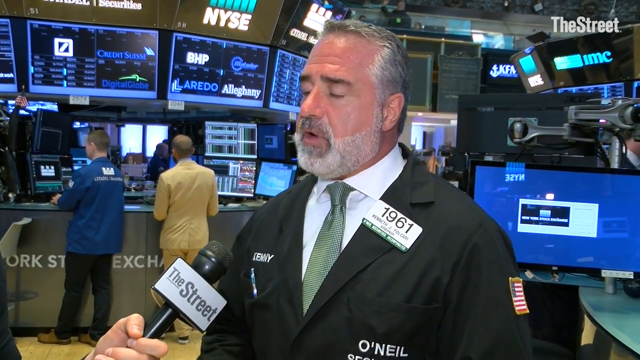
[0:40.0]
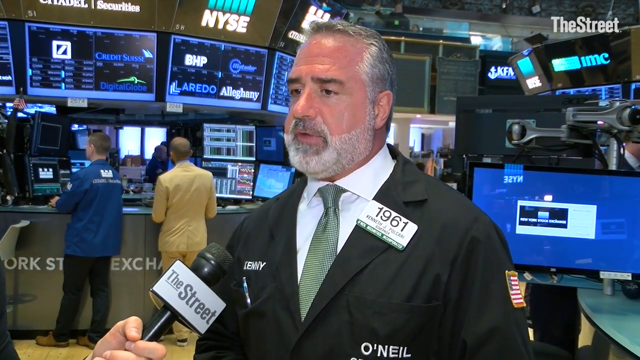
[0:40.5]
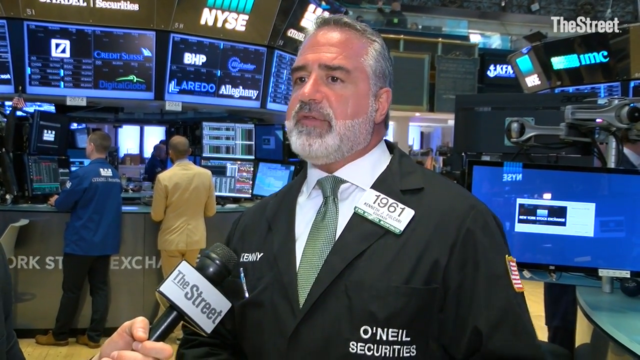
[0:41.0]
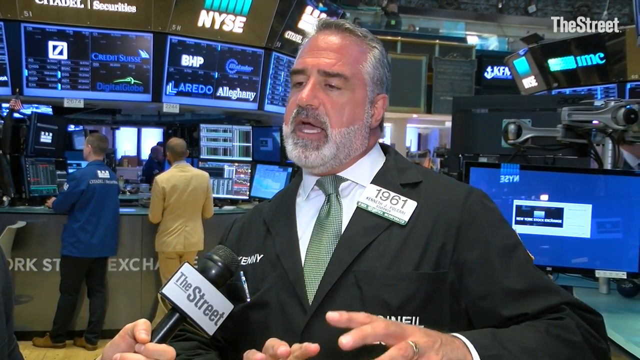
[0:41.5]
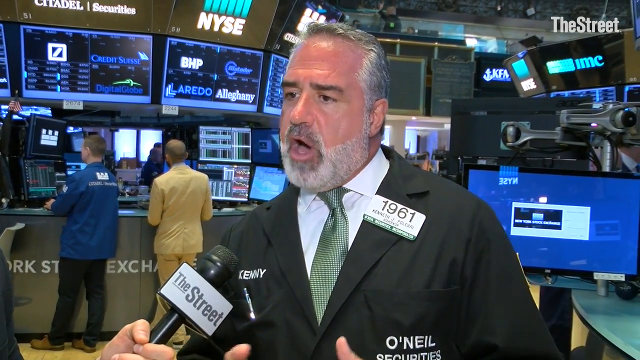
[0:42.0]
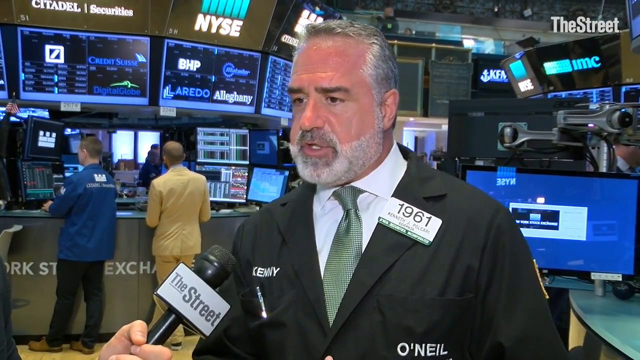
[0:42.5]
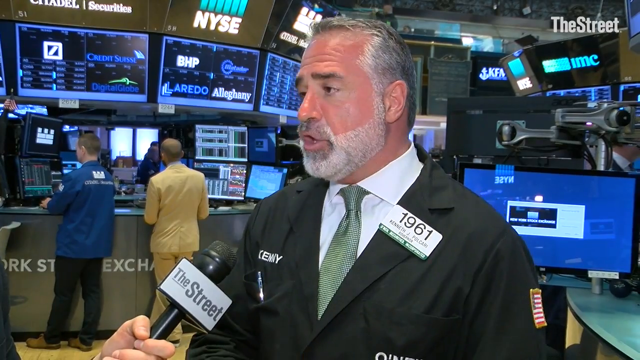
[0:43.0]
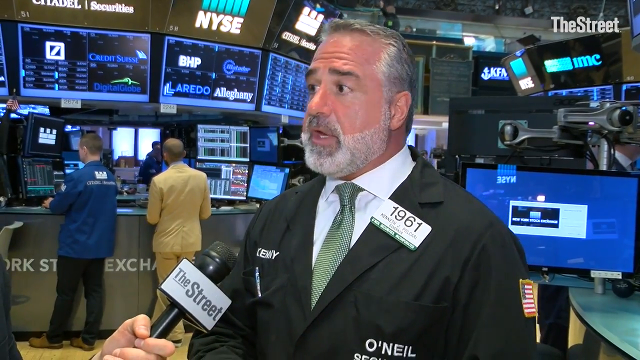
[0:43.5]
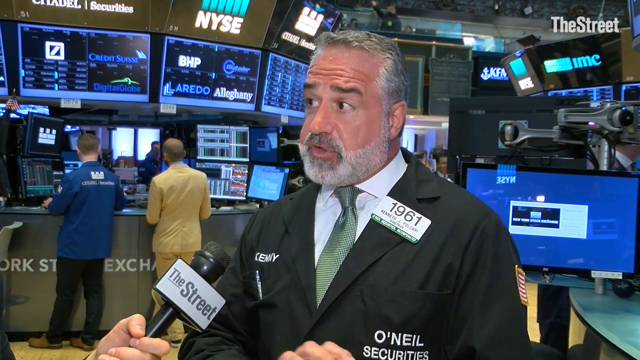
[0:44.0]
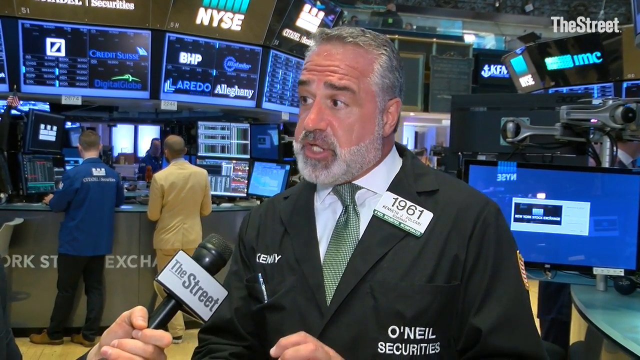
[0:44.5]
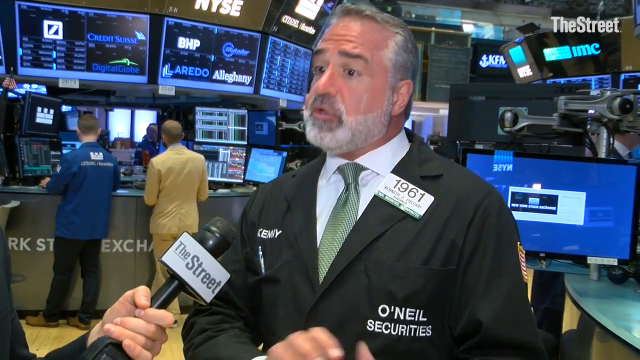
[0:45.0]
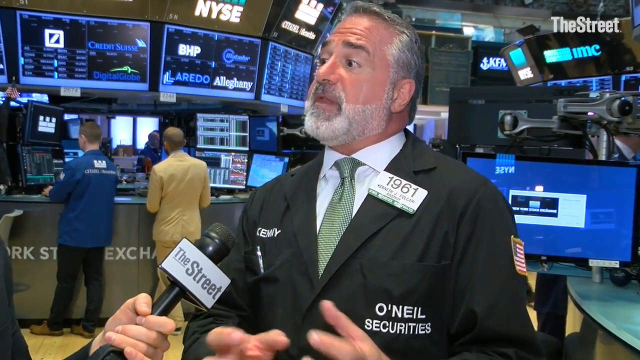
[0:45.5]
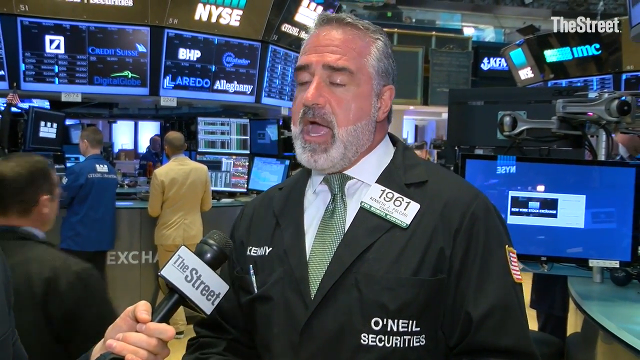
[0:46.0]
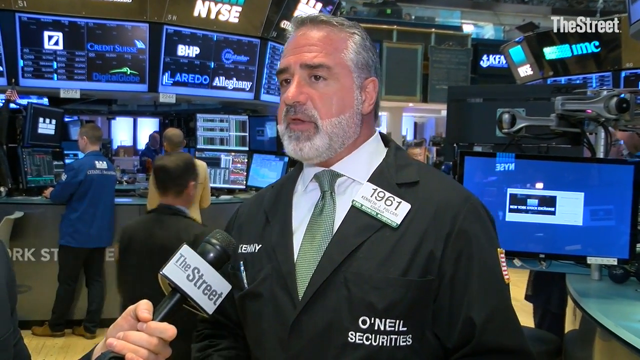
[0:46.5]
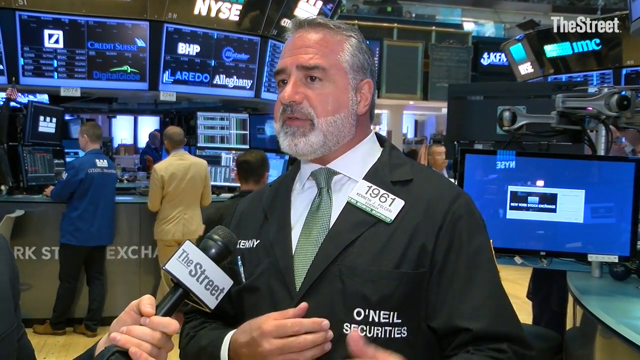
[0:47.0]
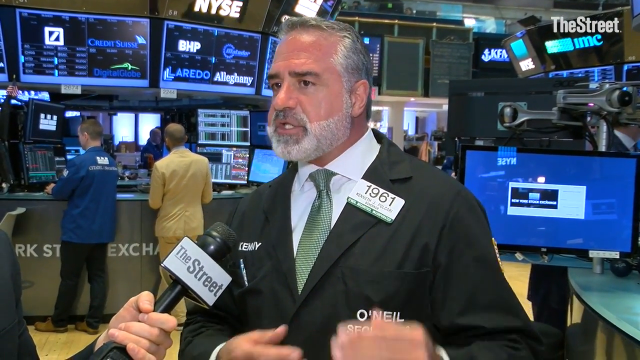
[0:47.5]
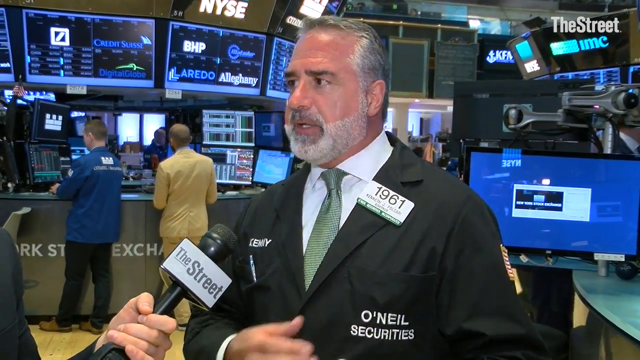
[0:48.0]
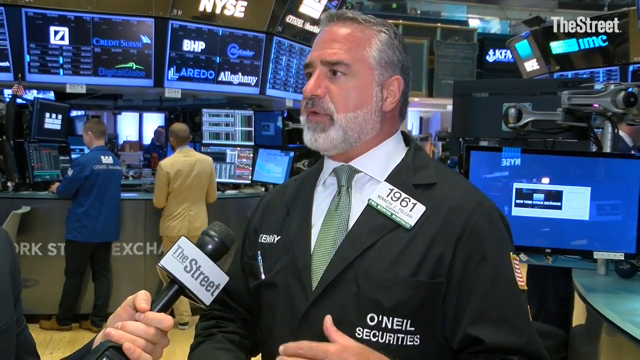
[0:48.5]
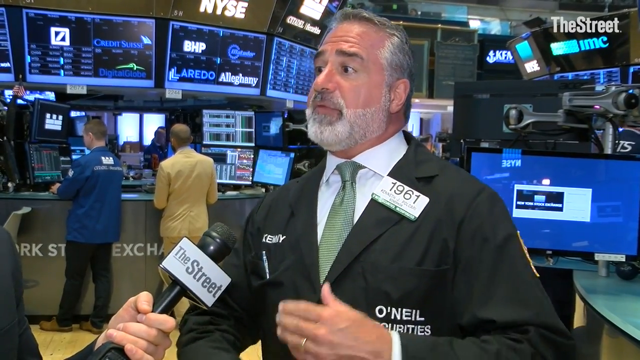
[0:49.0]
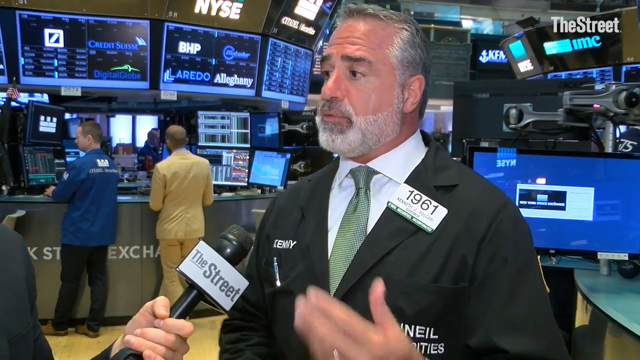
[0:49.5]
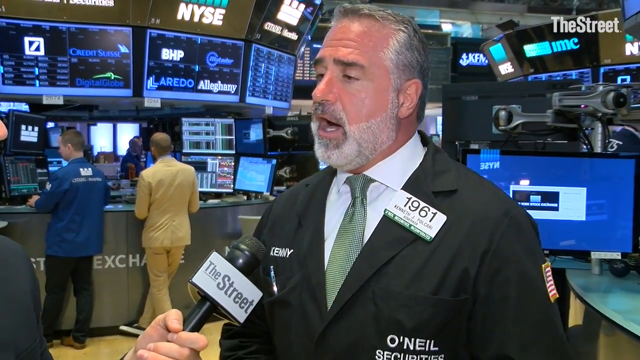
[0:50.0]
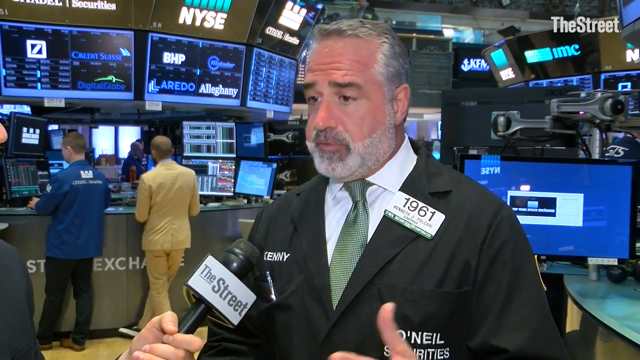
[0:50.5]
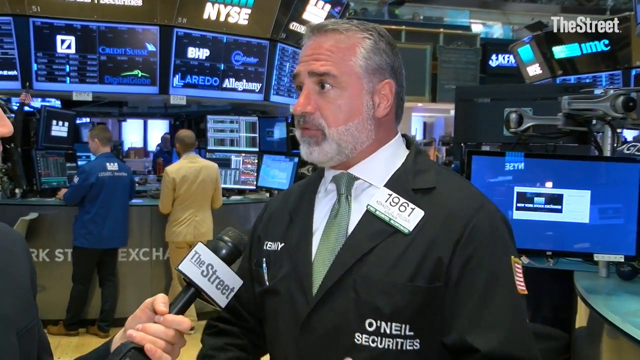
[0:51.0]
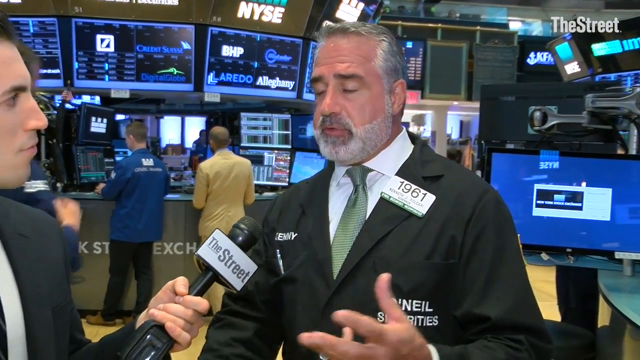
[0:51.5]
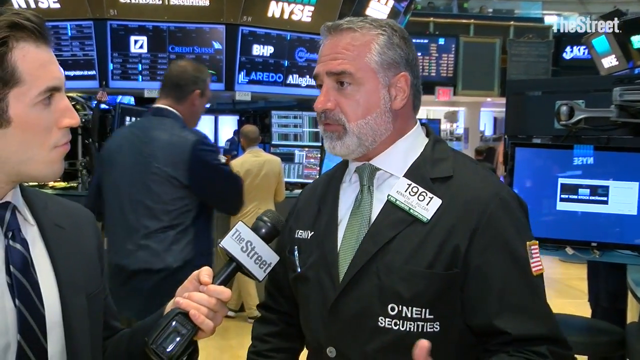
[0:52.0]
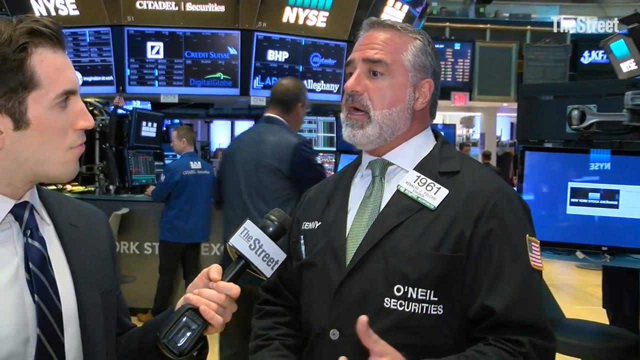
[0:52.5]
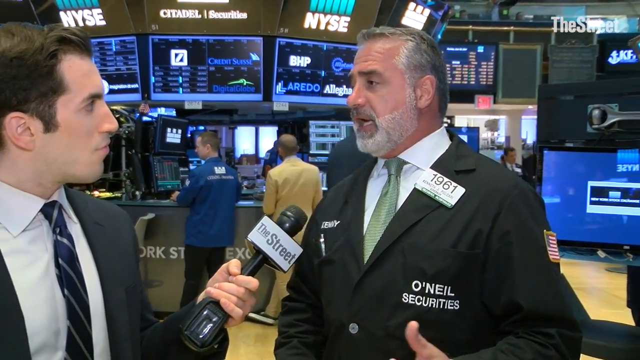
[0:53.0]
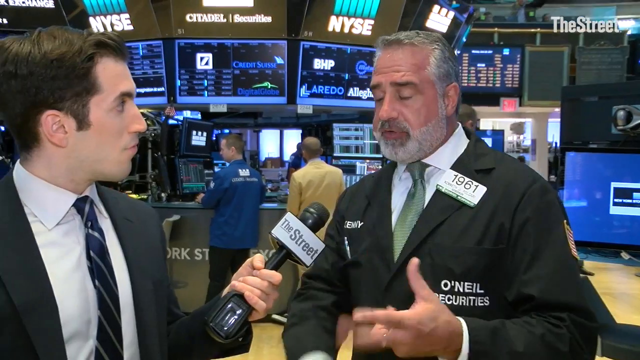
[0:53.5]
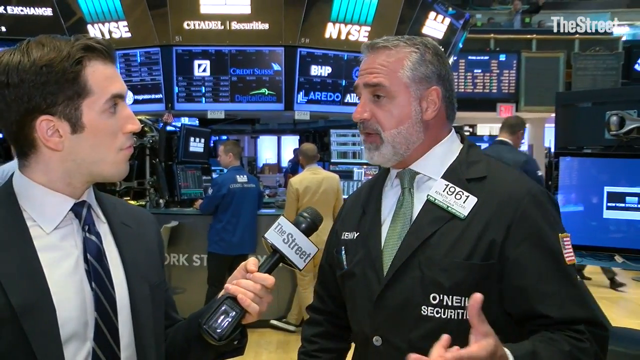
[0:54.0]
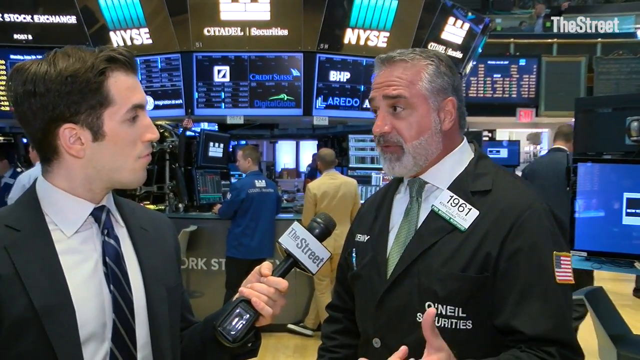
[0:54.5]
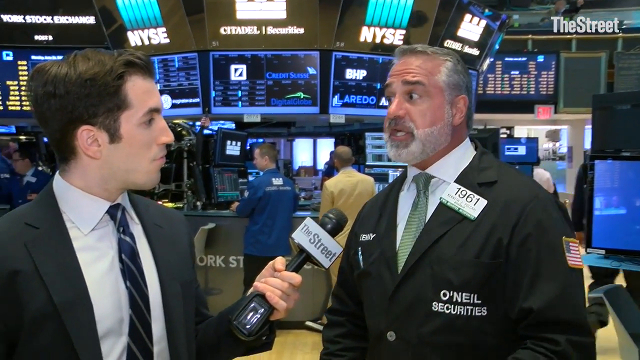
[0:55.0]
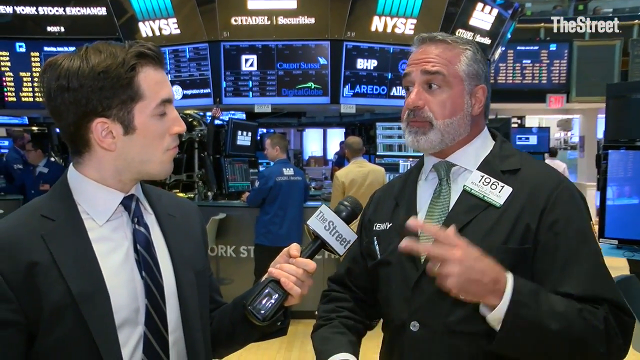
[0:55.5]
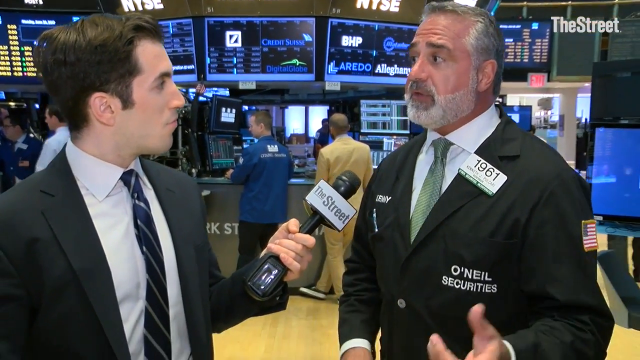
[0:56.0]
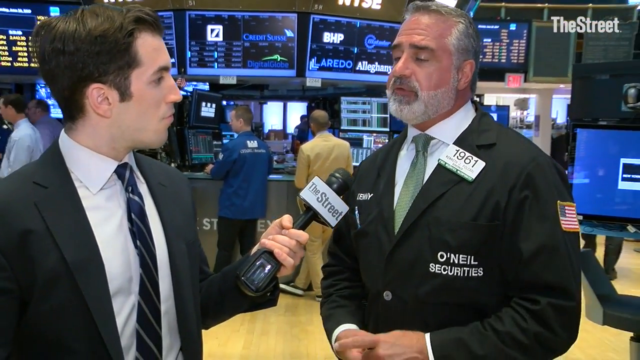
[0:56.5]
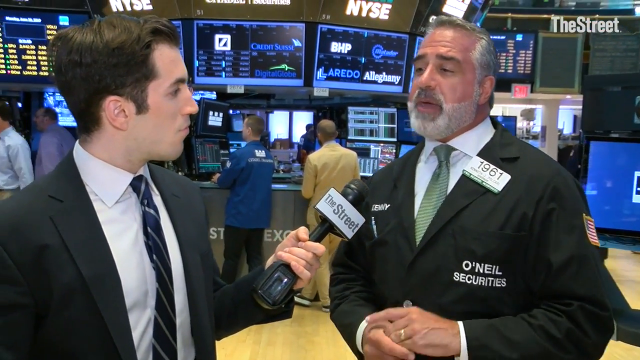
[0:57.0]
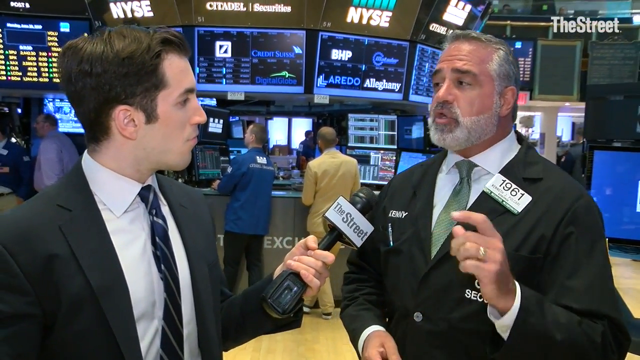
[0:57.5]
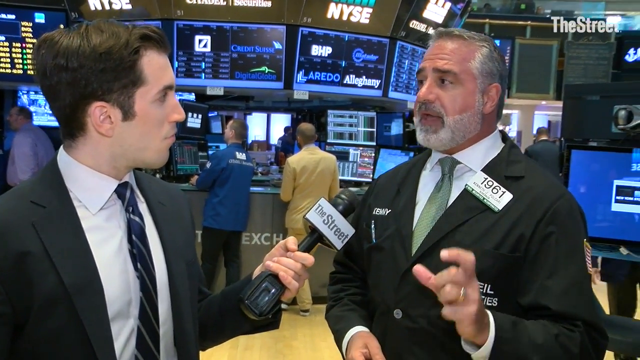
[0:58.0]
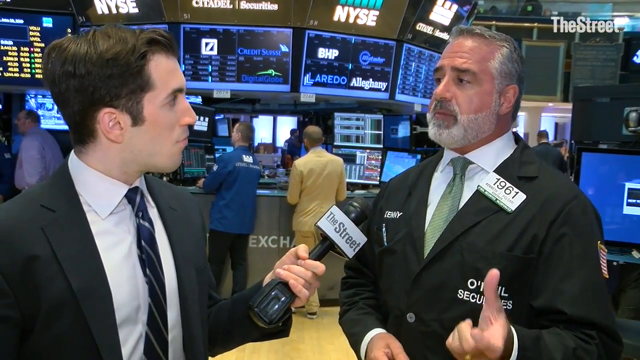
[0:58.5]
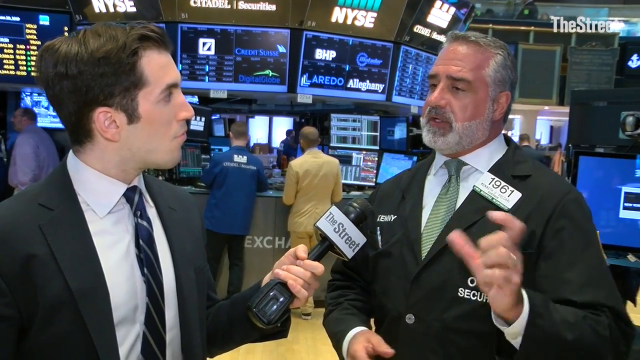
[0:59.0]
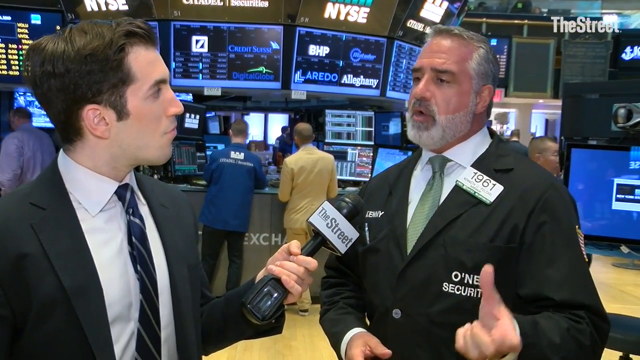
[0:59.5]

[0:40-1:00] The scene stays in the same location with the man named Kennedy, identified by the number 1961. He seems to be a middle-aged Caucasian man with a beard, probably around 50 years old, who works for O'Neill Security and is talking to a reporter from the street, probably about the $3.5 billion stake in Nestle. In the back are many blue screens with graphs, double-mounted monitors, monitors everywhere, and TV screens showing businesses, charts, Citadel Securities and the New York Stock Exchange. The area has a very tall ceiling, probably about 50 feet high. At the front, people wear clothing showing they are with Citadel Securities, and there is an individual in a yellow suit. People are walking around all over the place. Everyone wears business attire: some wear a suit with a tie and a dress shirt, and others wear just regular dress shirts.